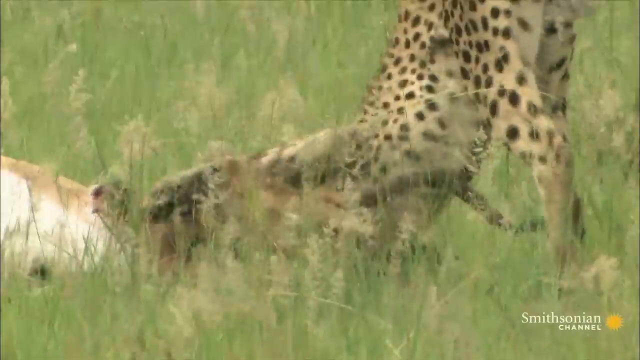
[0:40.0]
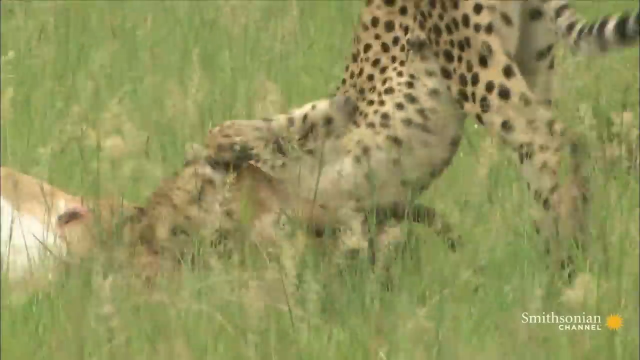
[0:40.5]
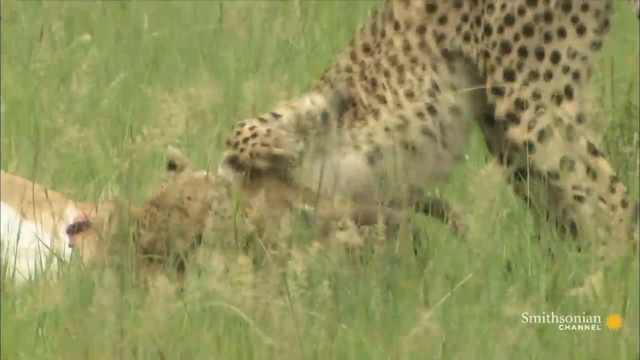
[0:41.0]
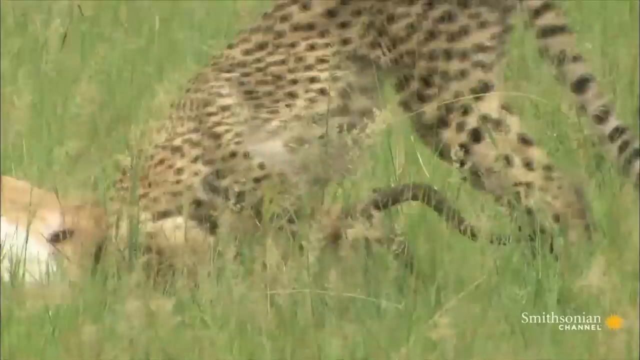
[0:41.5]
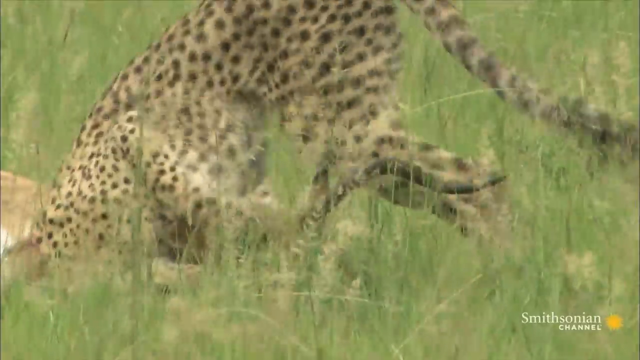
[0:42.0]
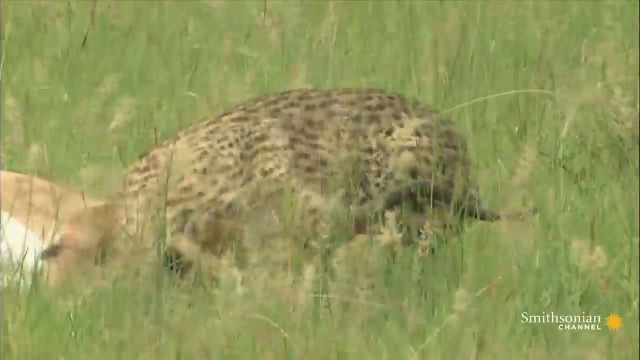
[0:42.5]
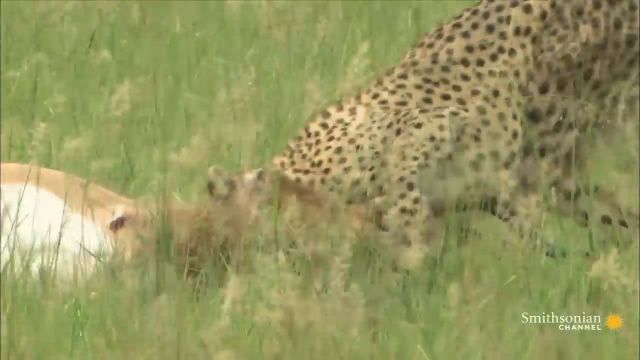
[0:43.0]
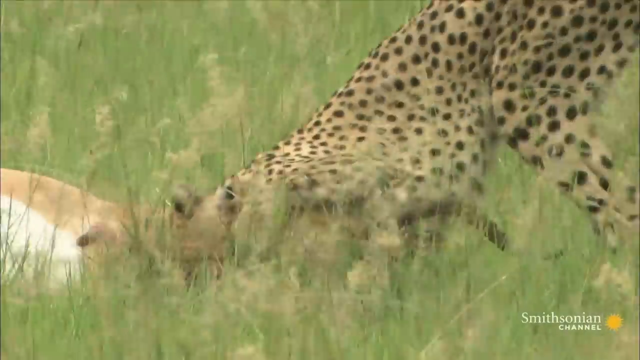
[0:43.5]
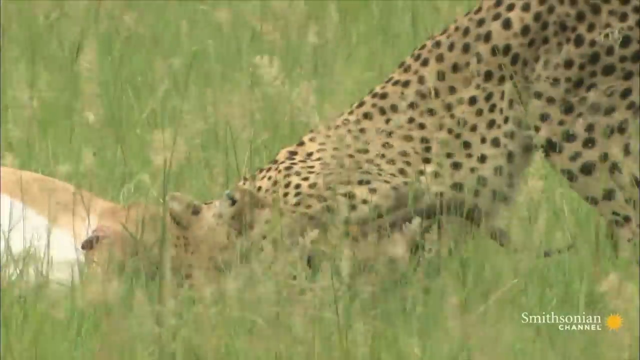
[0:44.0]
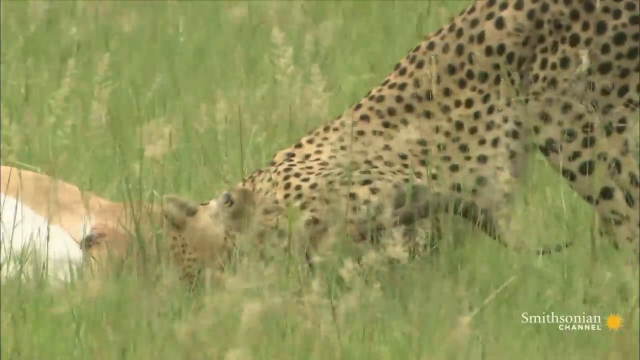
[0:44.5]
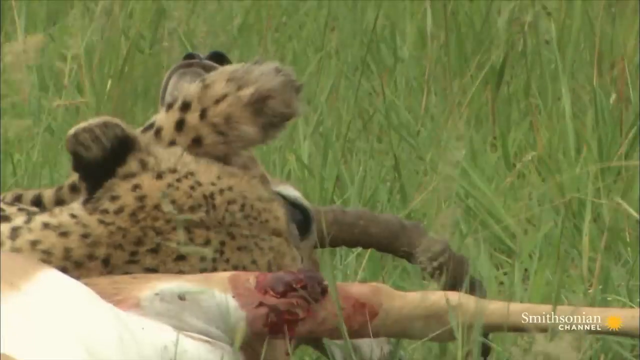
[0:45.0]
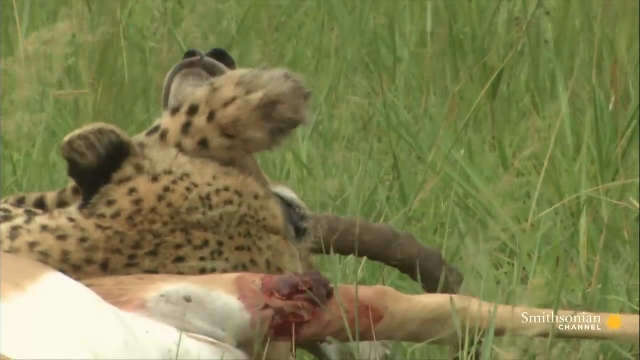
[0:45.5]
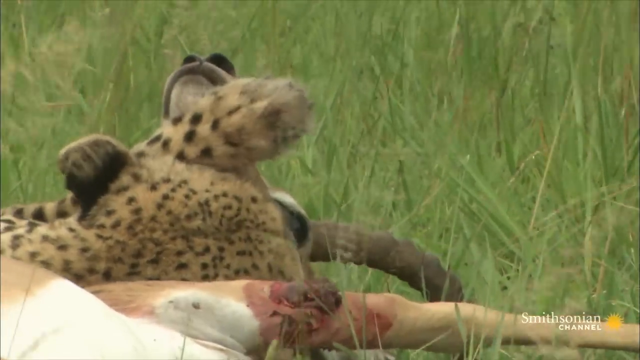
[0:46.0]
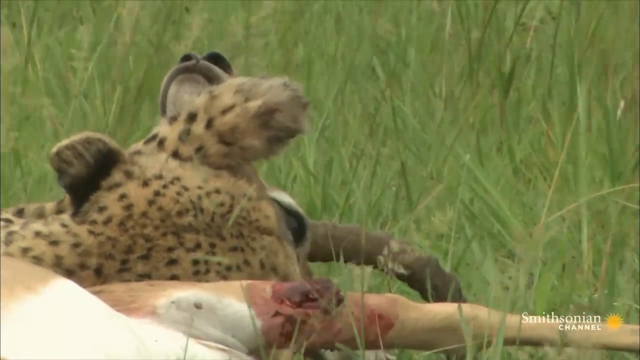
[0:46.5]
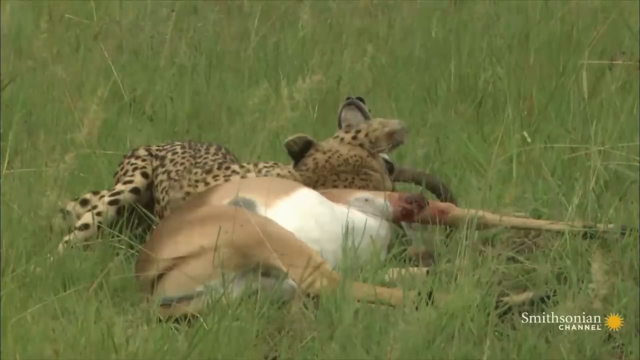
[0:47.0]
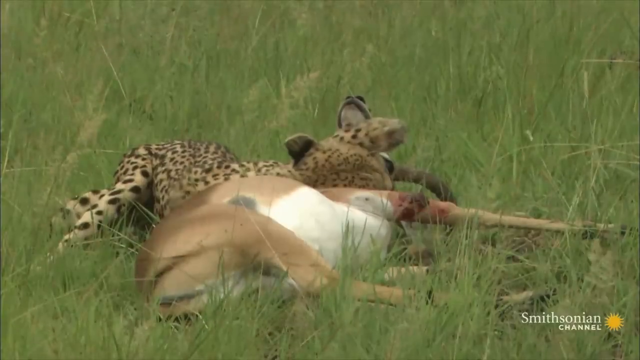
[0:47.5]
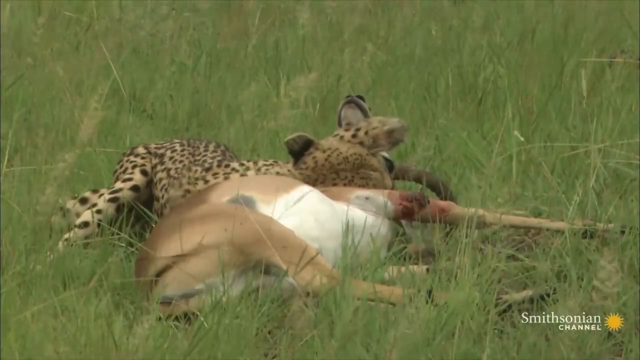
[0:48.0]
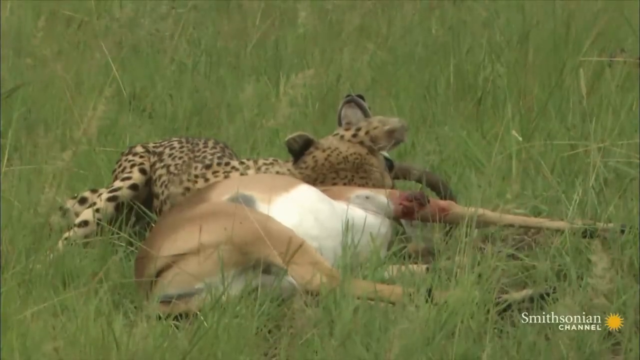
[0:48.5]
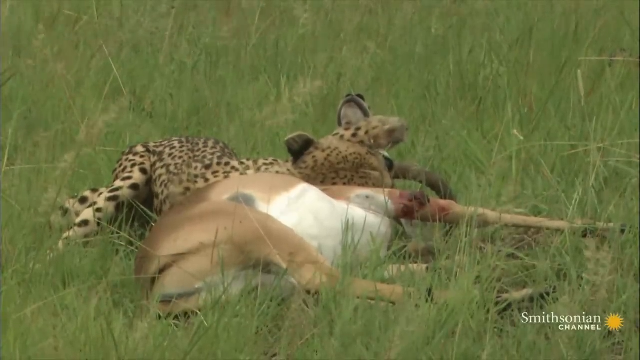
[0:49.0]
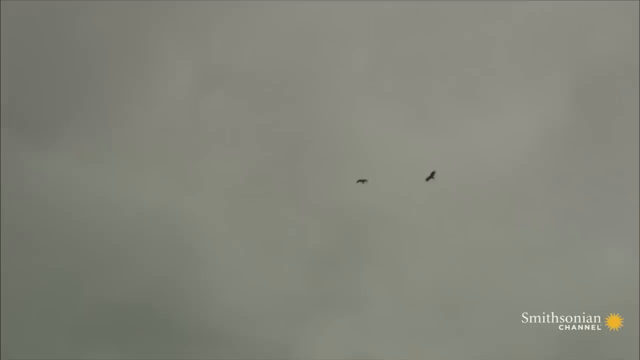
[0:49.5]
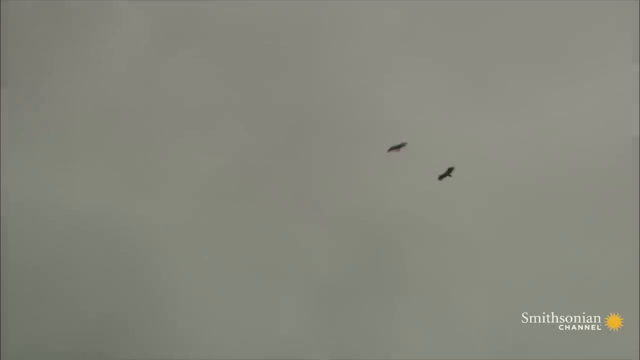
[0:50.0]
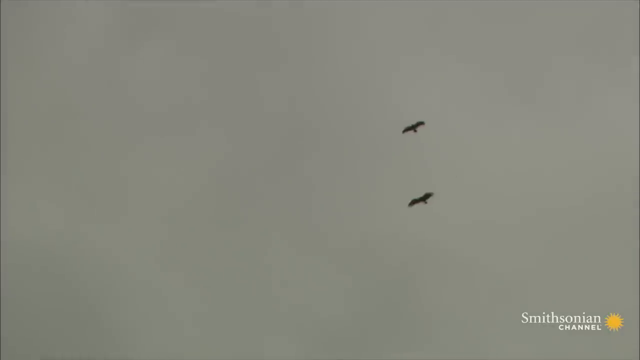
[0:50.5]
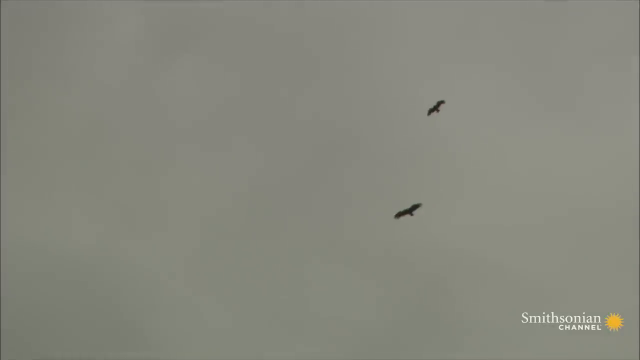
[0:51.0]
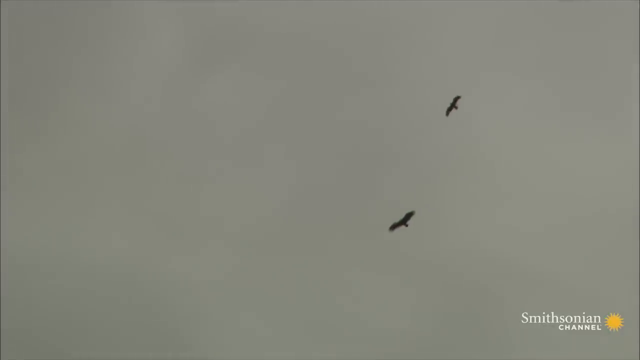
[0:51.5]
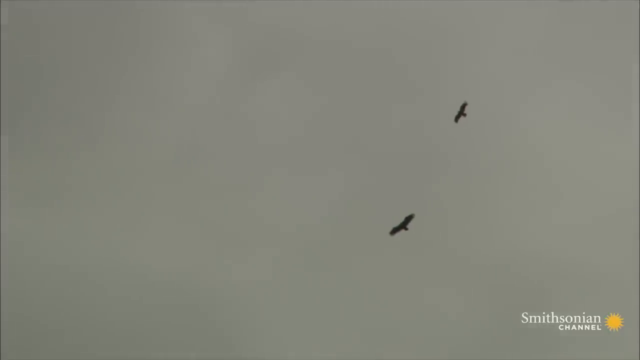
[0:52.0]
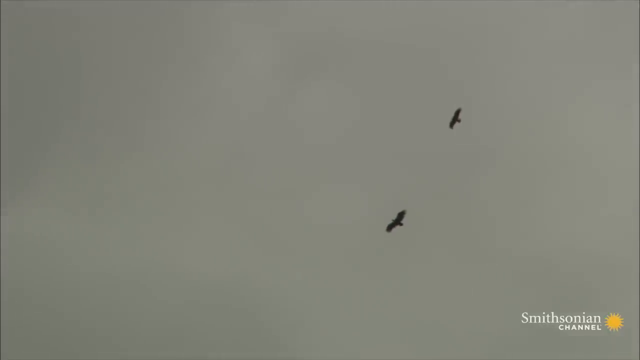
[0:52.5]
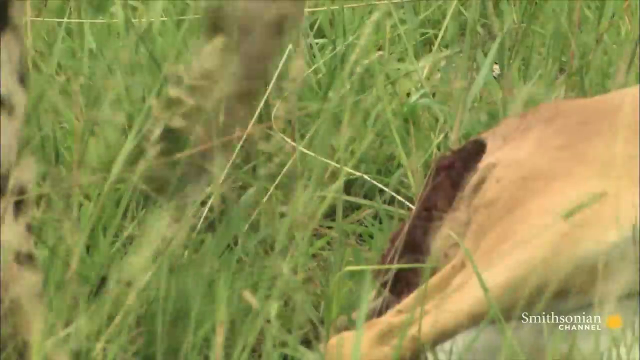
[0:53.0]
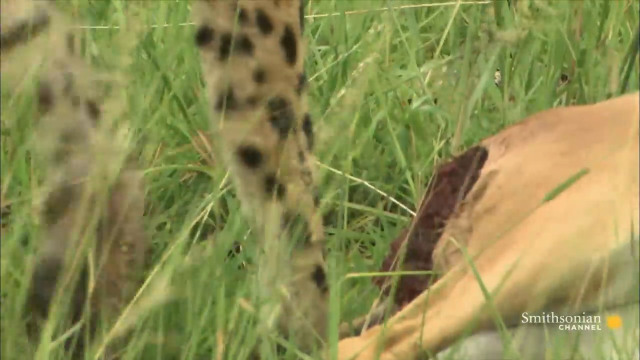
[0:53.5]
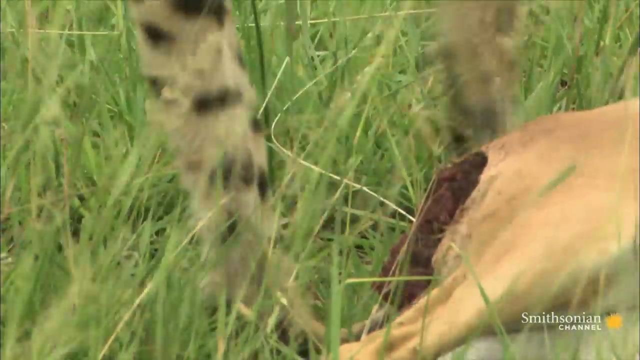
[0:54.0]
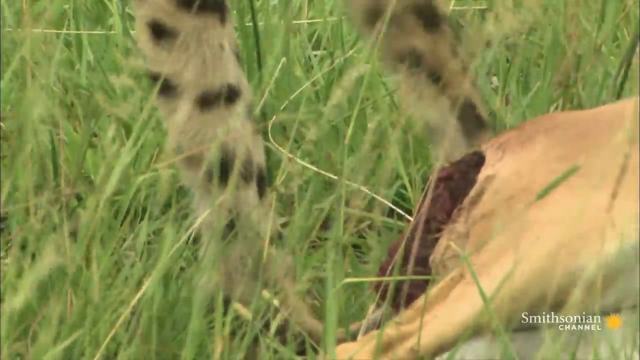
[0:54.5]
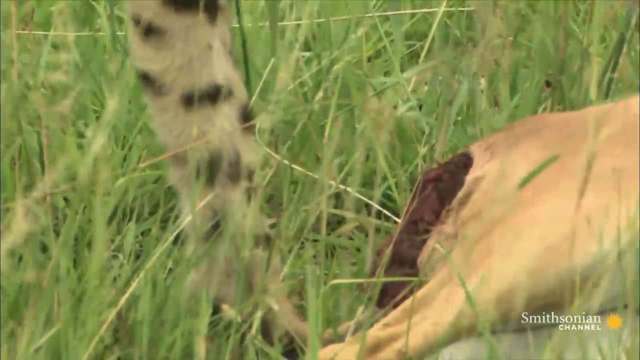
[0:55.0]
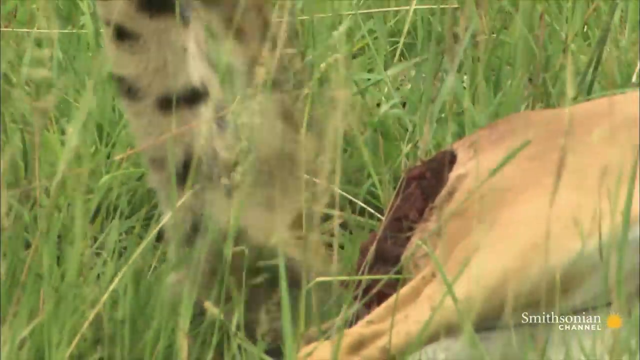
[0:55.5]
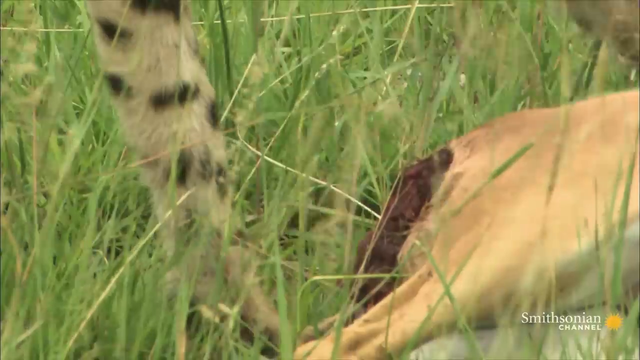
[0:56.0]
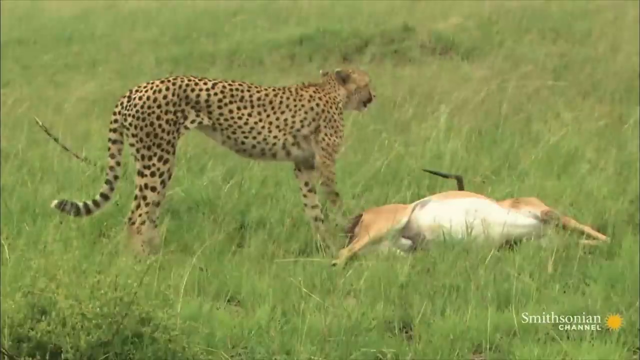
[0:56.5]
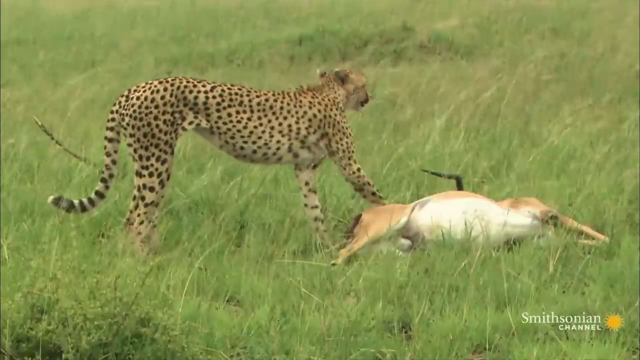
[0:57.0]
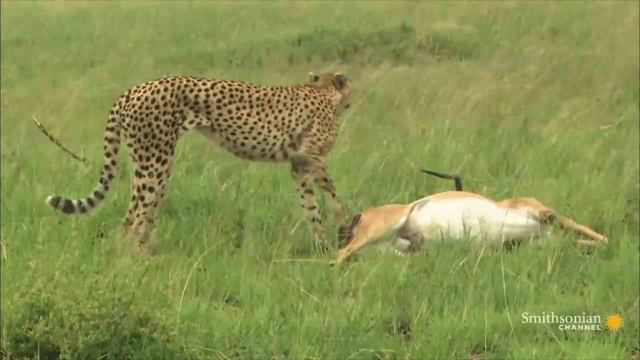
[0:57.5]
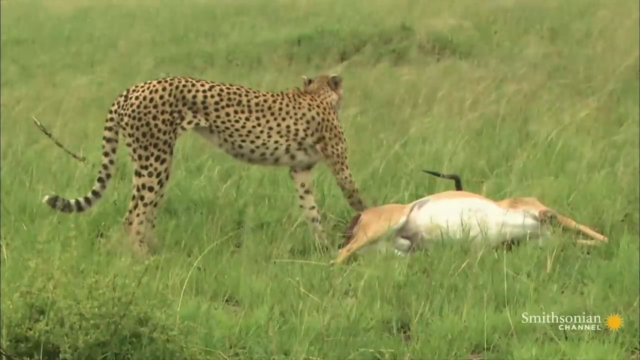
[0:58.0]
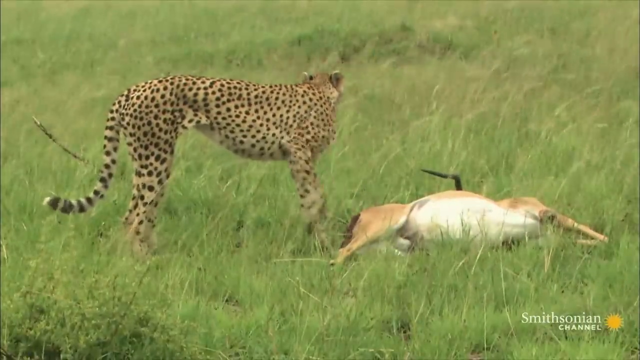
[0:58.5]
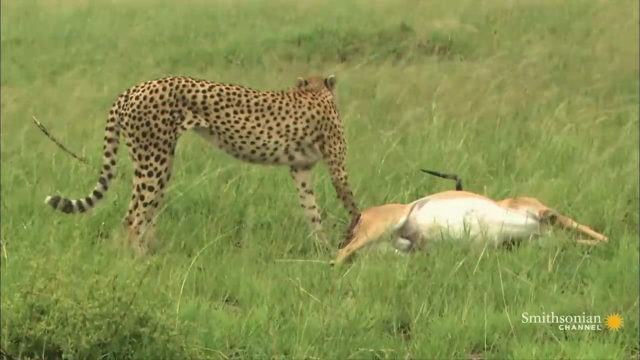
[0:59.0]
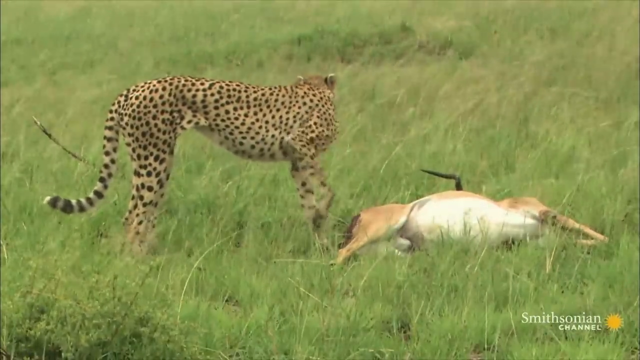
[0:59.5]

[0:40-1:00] The cheetah seems to have overpowered the impala, which lies dead on the ground. In a very close-up shot, the cheetah looks like it is giving the final bite to kill the impala. The cheetah then appears to be lying down and tired, seemingly panting, while the dead impala lies nearby. After lying and panting for a while, the cheetah sort of paws at the ground around it. The only change in setting is a quick shot of two birds flying up in the sky, possibly vultures or other birds.